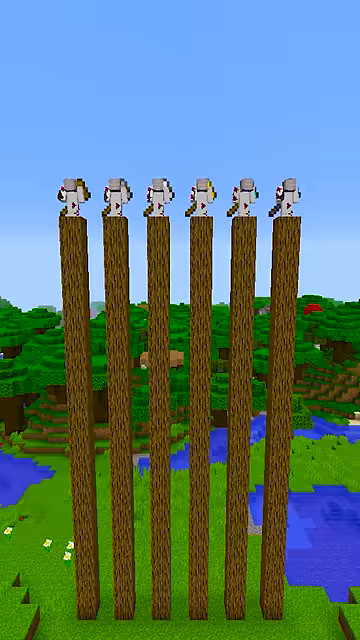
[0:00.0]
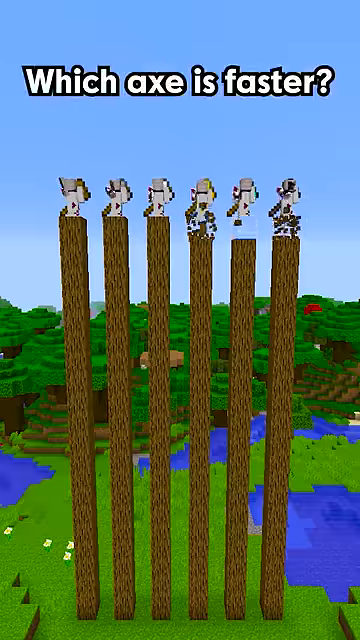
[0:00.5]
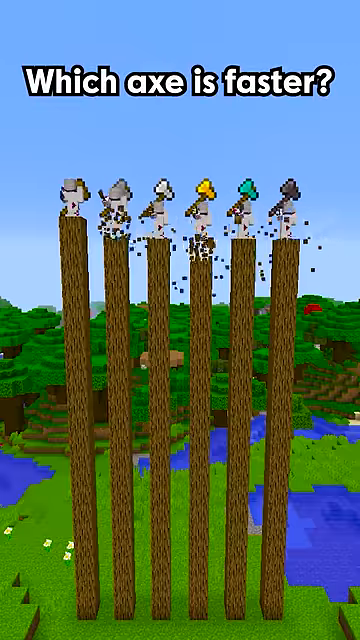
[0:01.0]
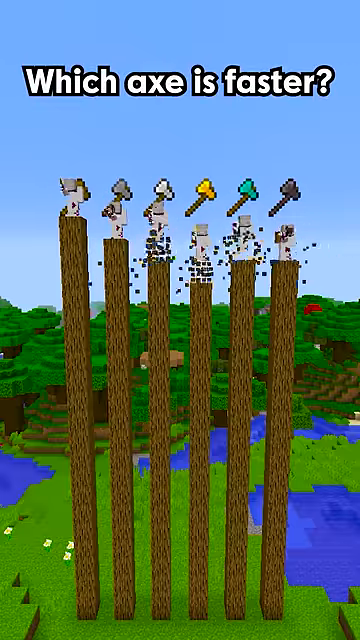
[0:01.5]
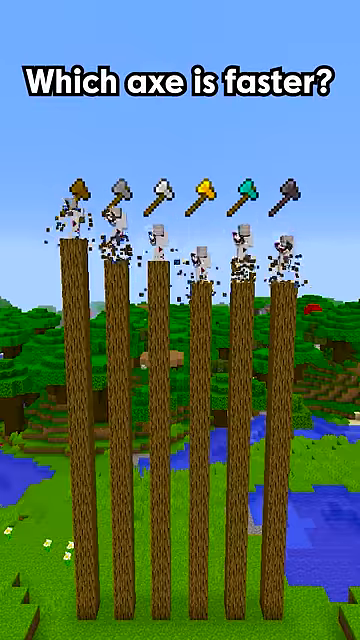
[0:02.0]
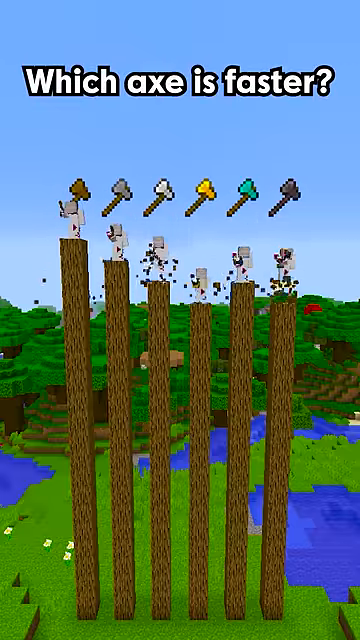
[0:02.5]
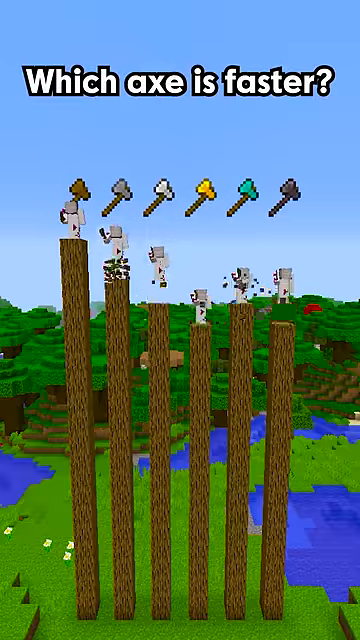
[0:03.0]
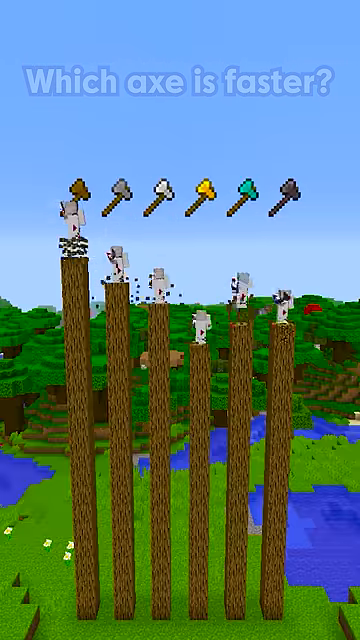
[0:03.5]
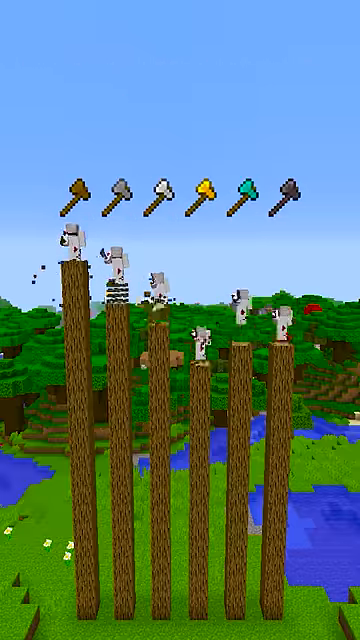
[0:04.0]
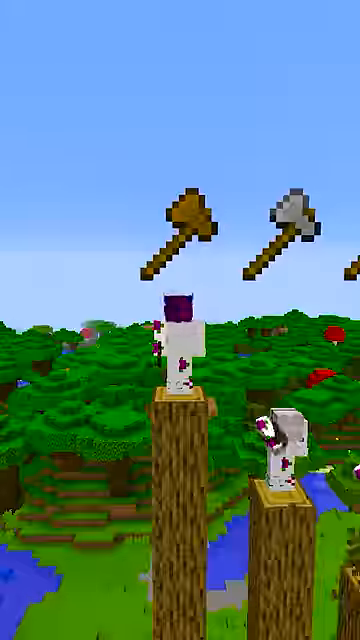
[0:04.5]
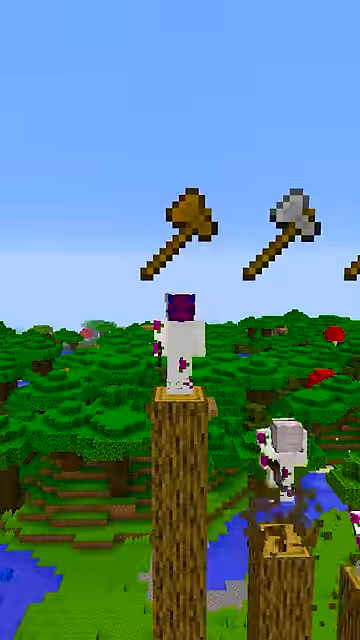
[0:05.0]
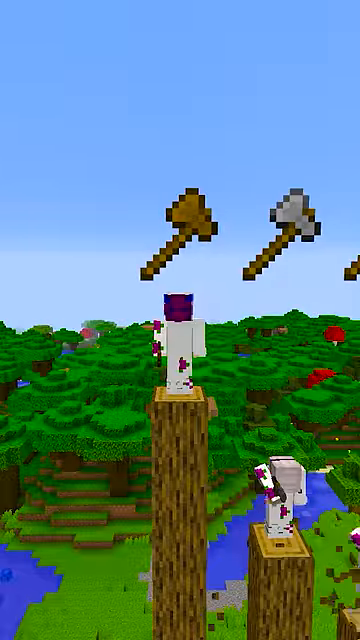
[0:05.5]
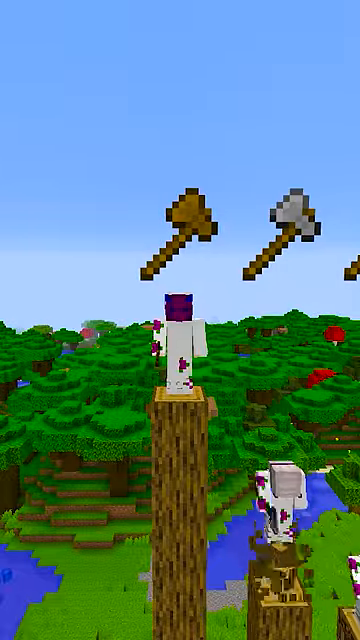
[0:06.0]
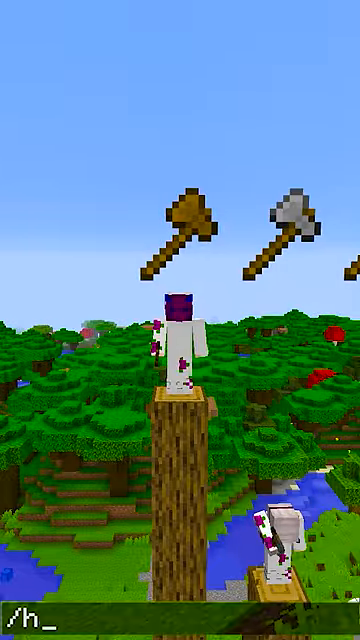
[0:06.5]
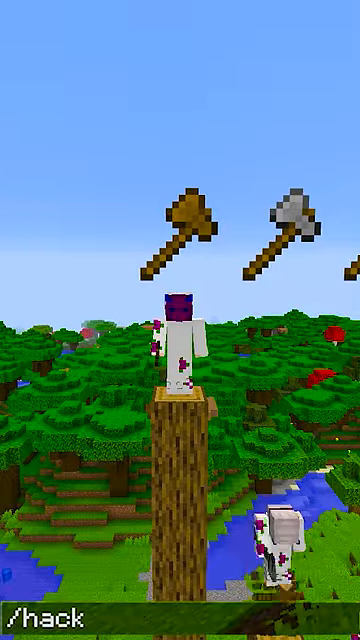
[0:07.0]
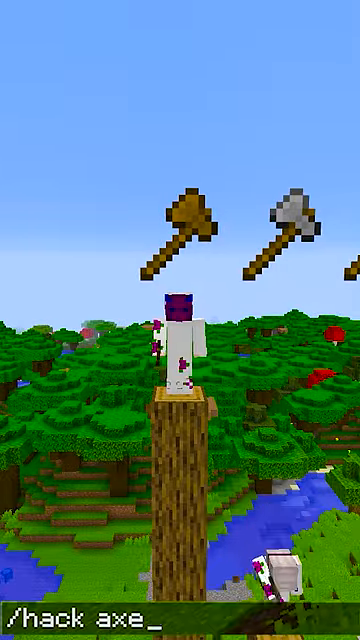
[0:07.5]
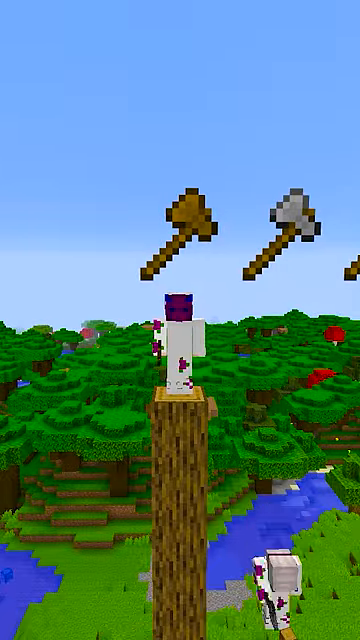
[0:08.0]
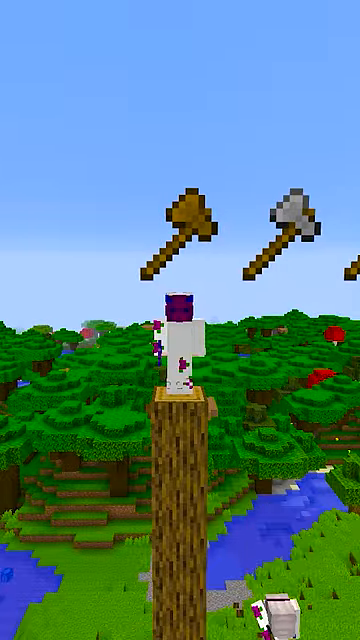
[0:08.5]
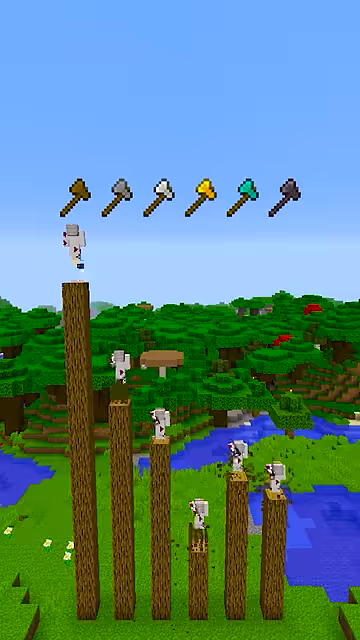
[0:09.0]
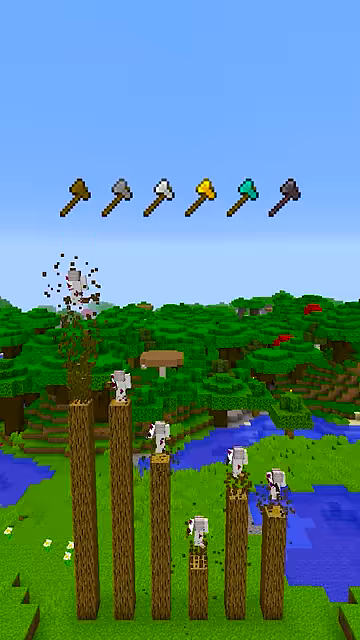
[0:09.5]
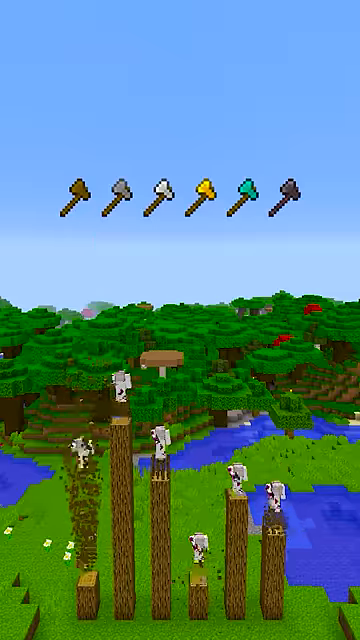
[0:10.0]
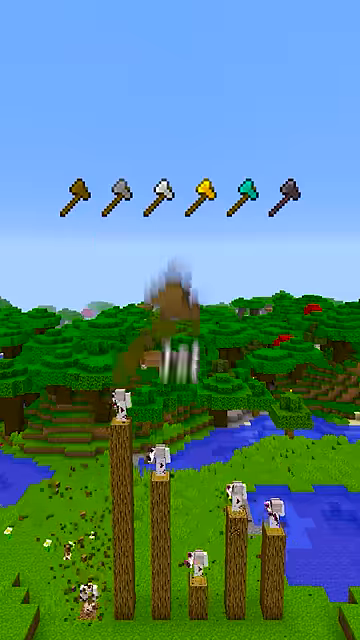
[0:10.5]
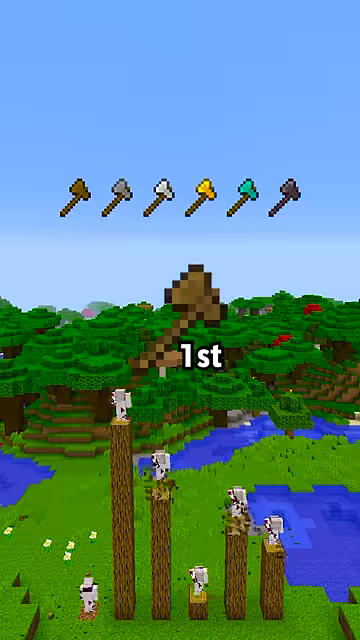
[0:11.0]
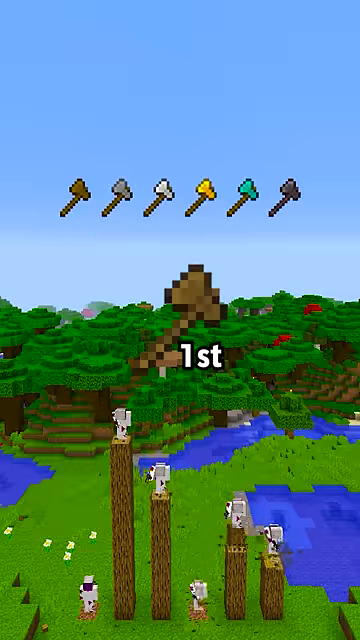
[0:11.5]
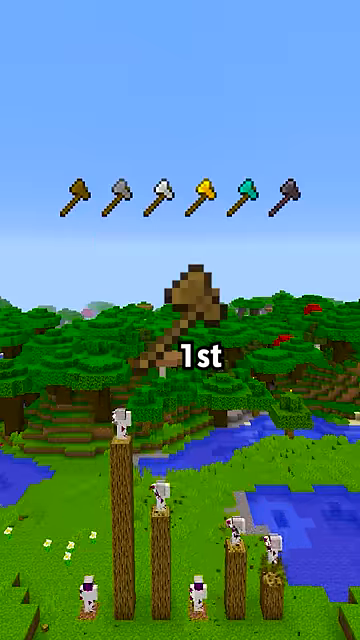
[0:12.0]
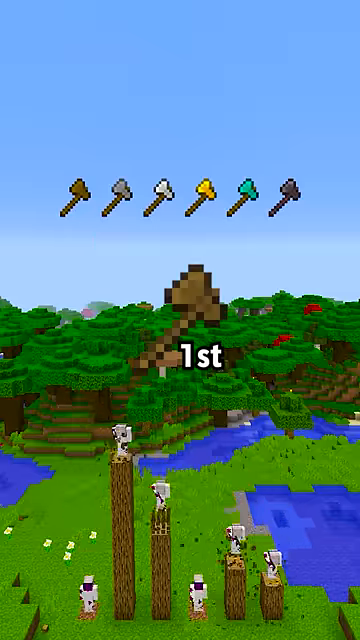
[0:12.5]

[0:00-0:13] A Minecraft-type game shows five different blocks stacked up, with a different colored axe over each set of blocks. It is a race to see who can get to the bottom of the stack the fastest, which sets the competing player on the ground. One of the player models is just standing there, then a typing prompt opens and the words "/ hack axe" are input into the text box. All of a sudden, the player who was standing there gets to the ground in an instant, implying that he has hacked the game. Behind the competing characters, Minecraft-created trees appear in the far background, with small ponds dispersed immediately behind the characters, as well as grass.